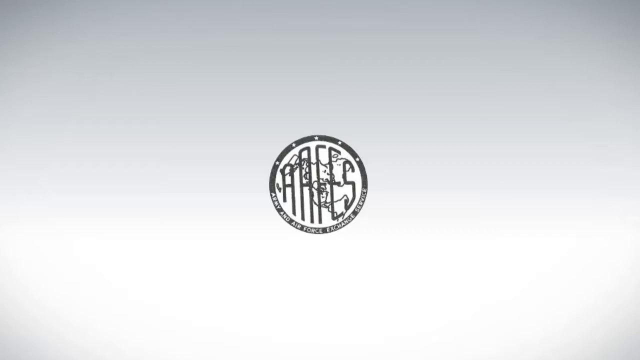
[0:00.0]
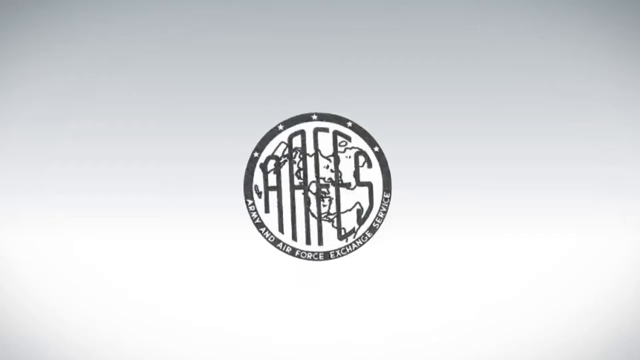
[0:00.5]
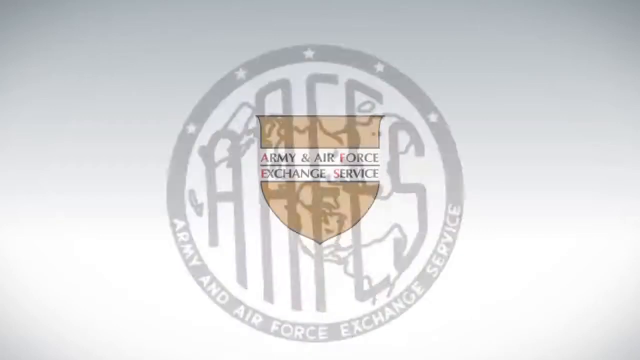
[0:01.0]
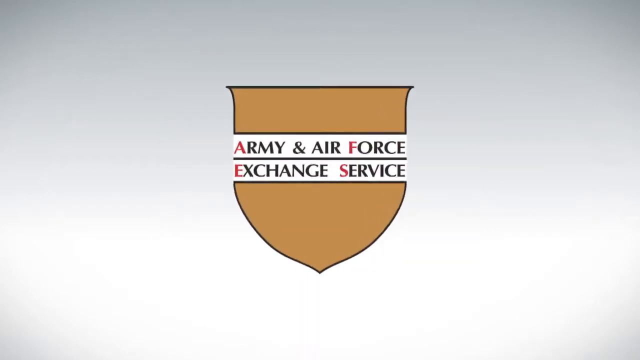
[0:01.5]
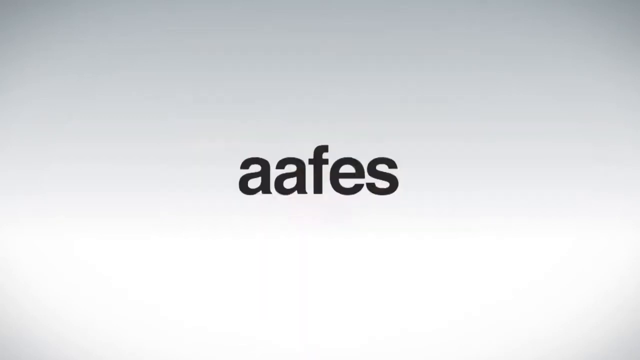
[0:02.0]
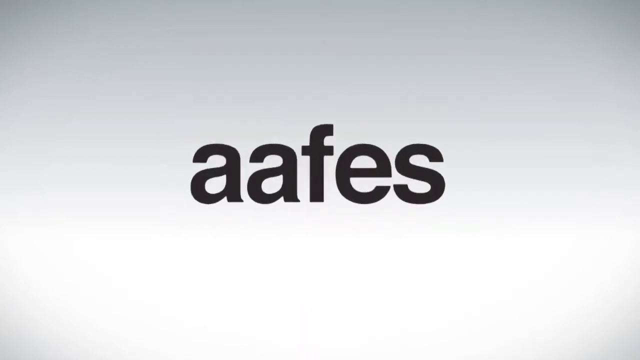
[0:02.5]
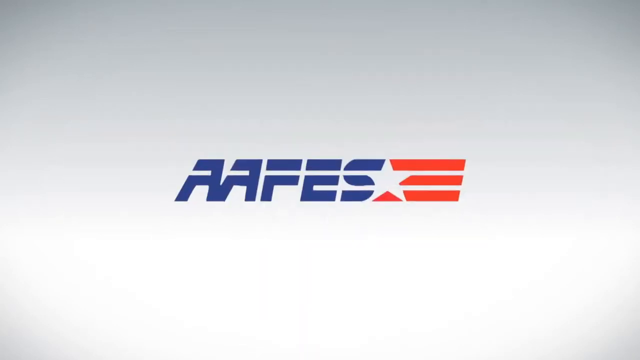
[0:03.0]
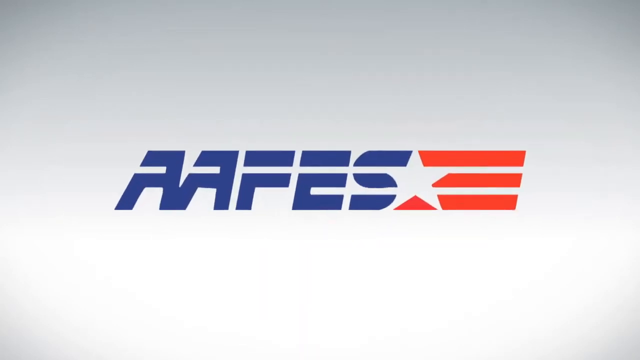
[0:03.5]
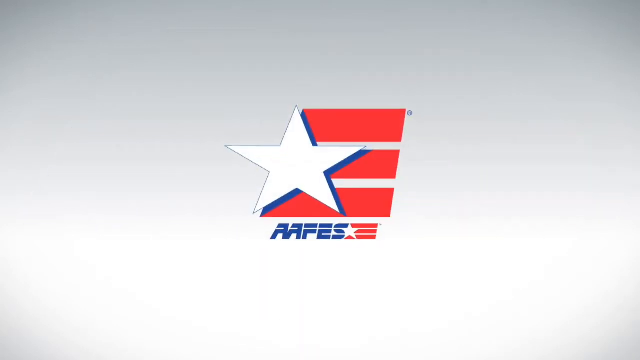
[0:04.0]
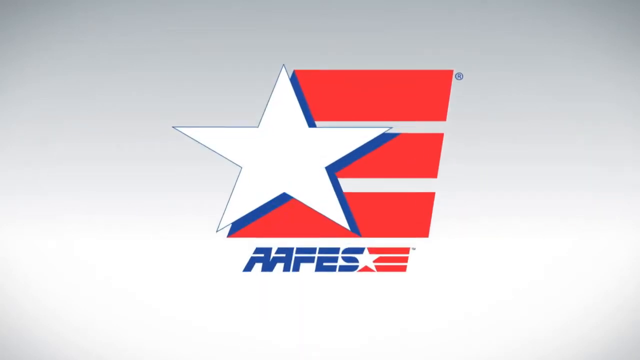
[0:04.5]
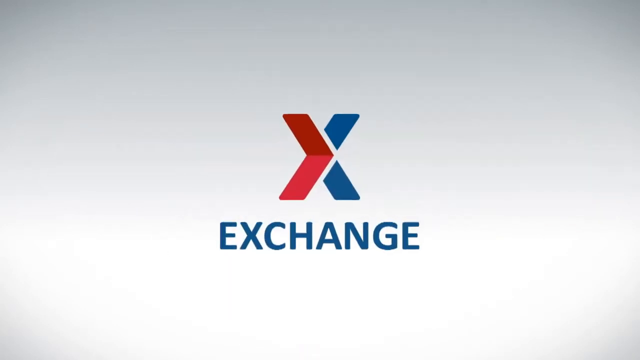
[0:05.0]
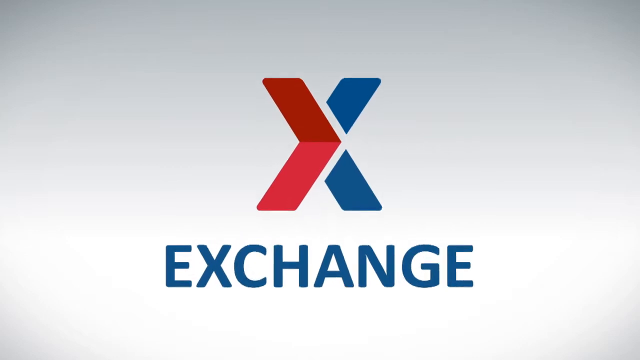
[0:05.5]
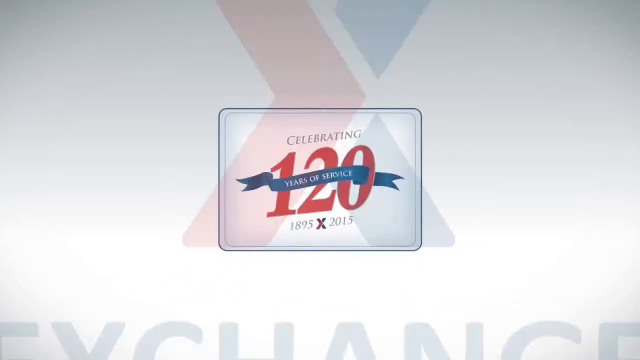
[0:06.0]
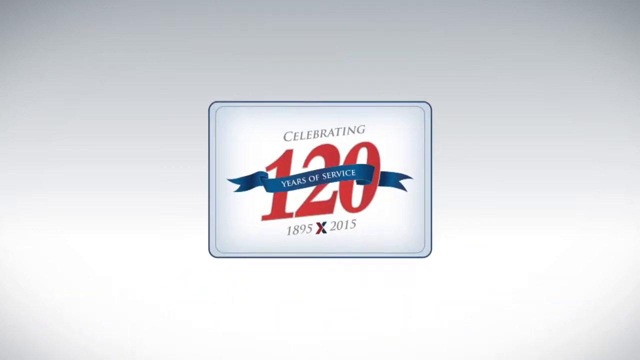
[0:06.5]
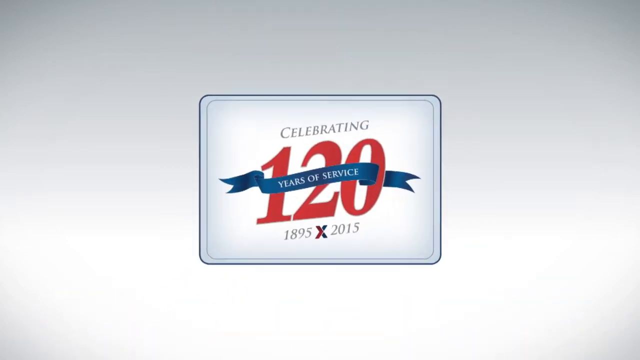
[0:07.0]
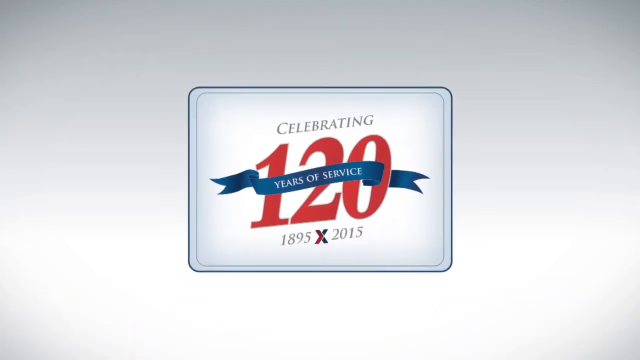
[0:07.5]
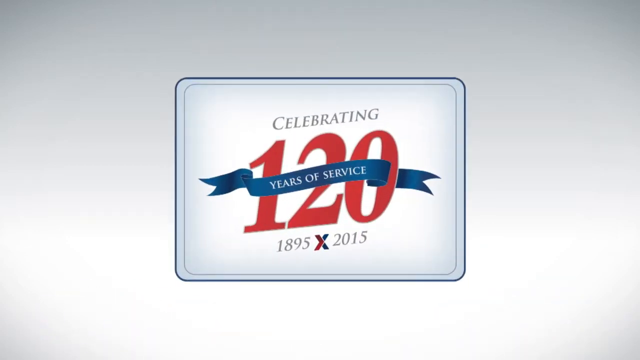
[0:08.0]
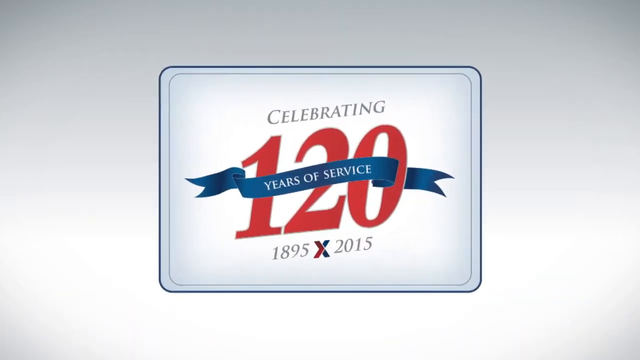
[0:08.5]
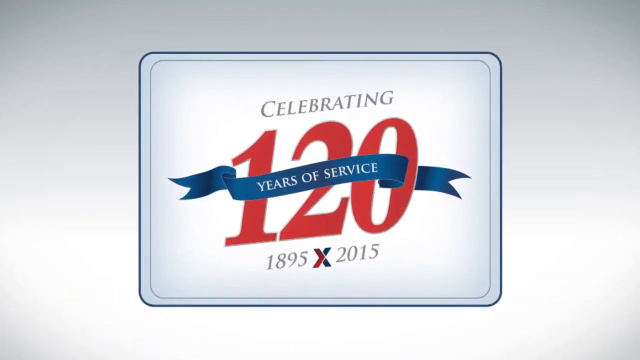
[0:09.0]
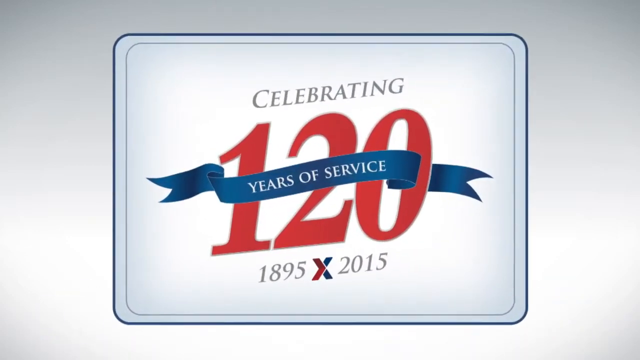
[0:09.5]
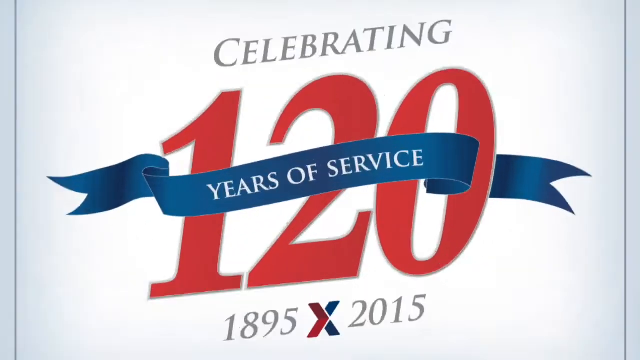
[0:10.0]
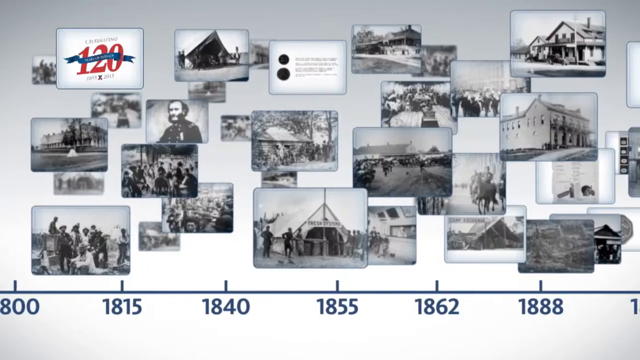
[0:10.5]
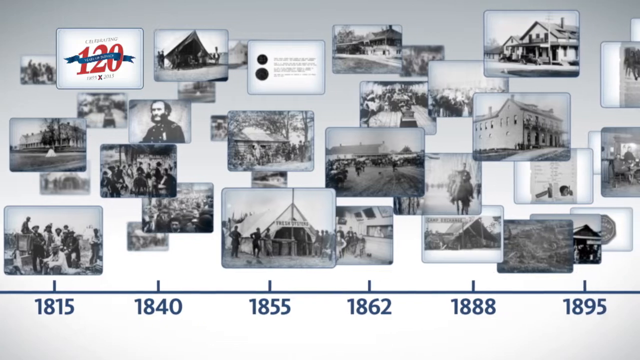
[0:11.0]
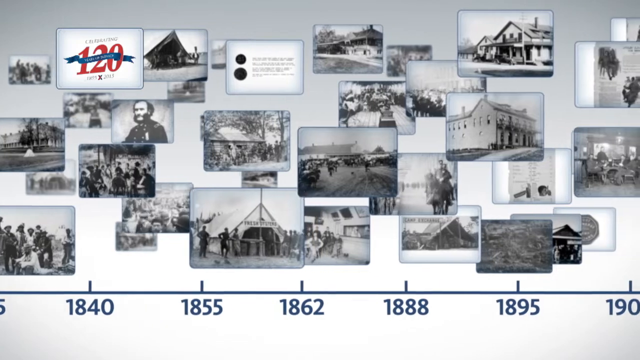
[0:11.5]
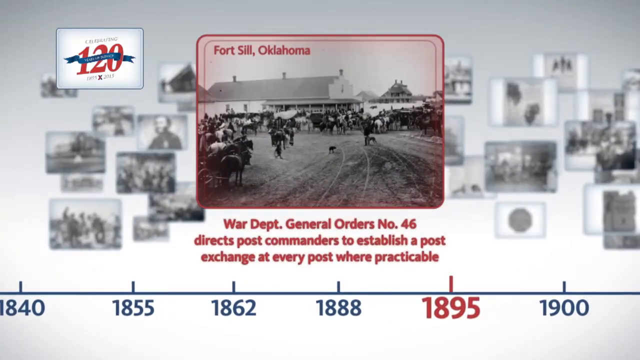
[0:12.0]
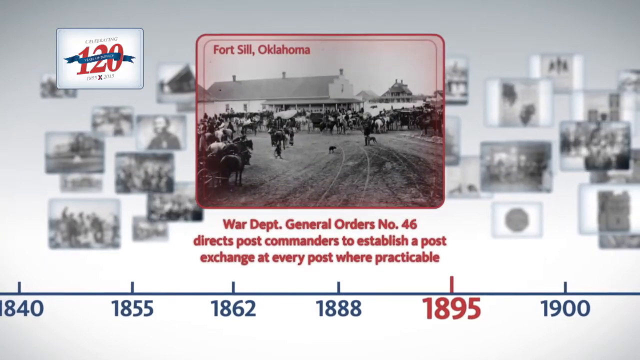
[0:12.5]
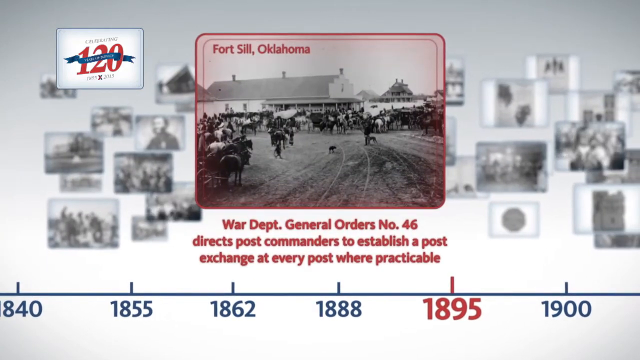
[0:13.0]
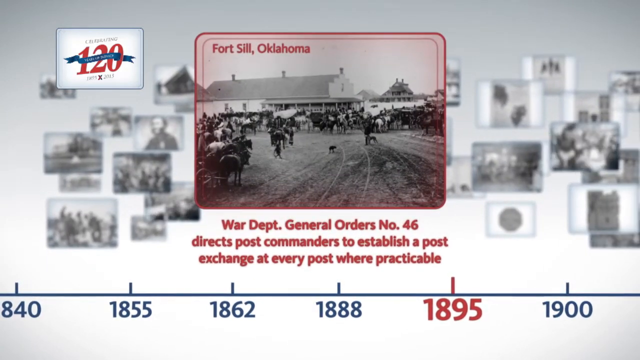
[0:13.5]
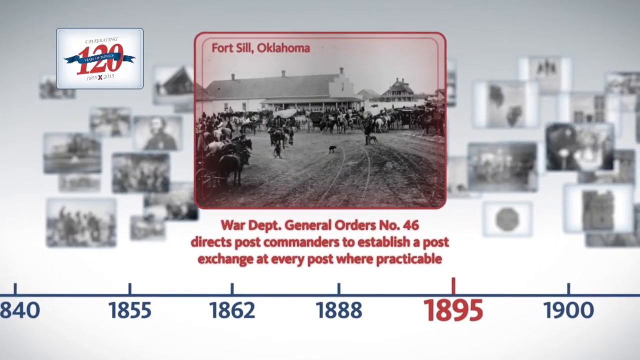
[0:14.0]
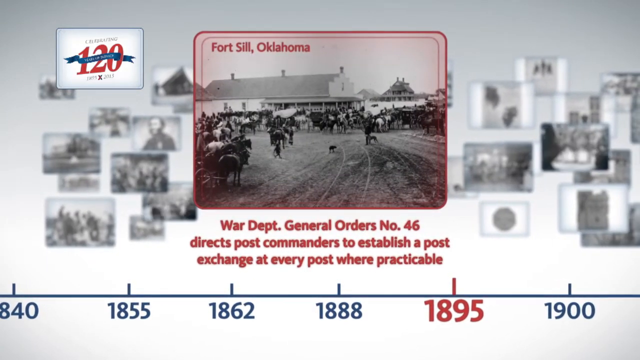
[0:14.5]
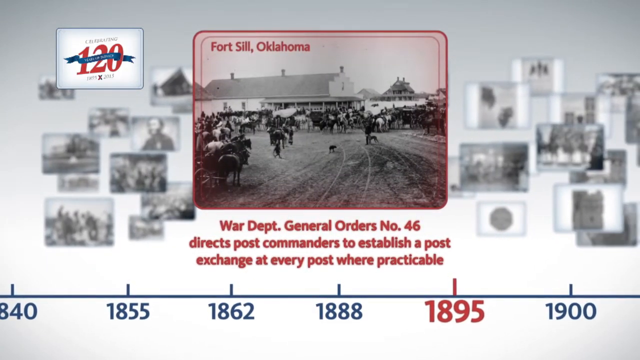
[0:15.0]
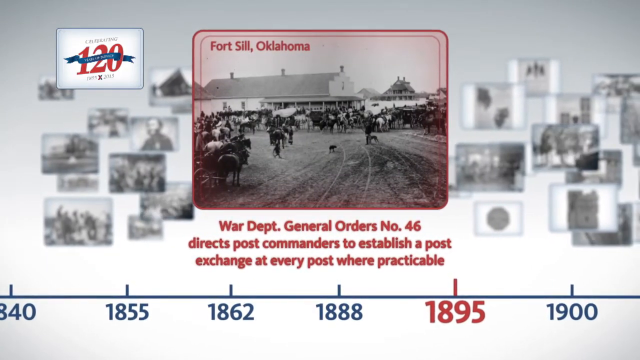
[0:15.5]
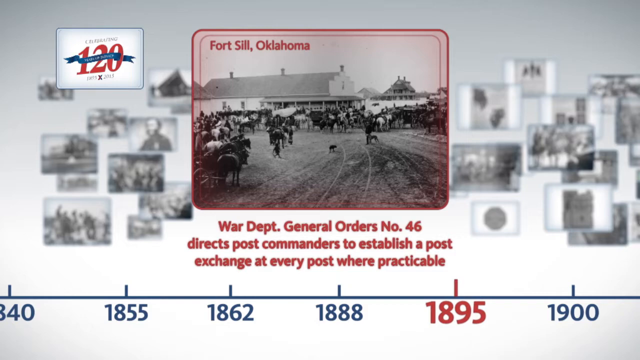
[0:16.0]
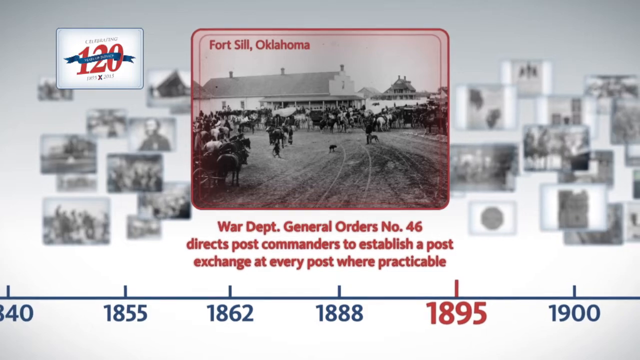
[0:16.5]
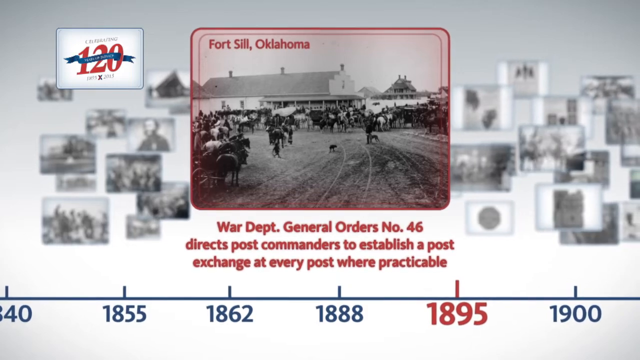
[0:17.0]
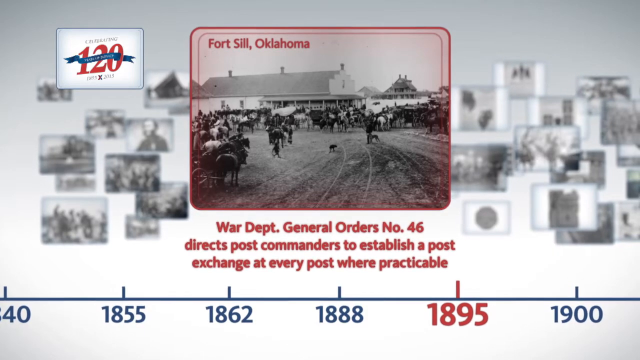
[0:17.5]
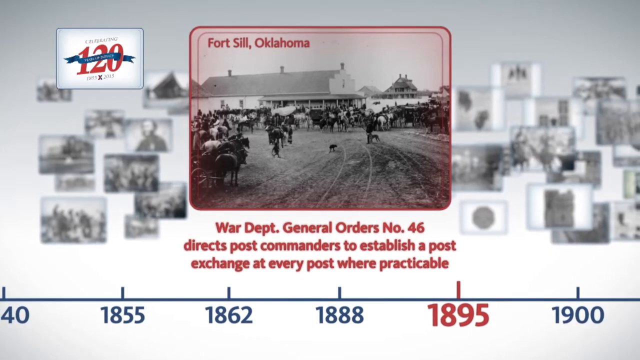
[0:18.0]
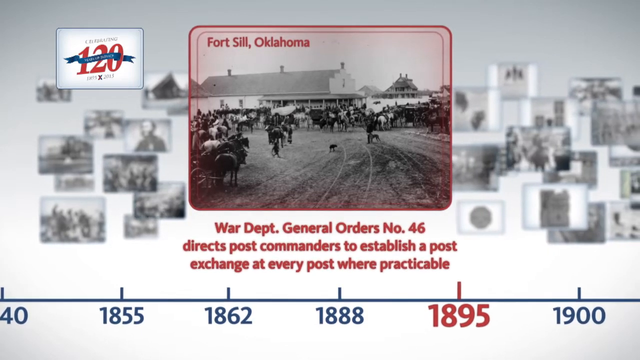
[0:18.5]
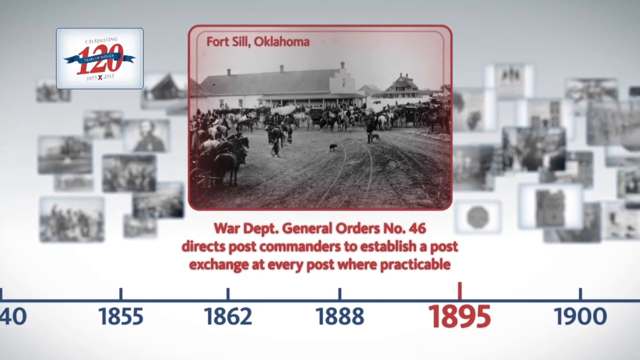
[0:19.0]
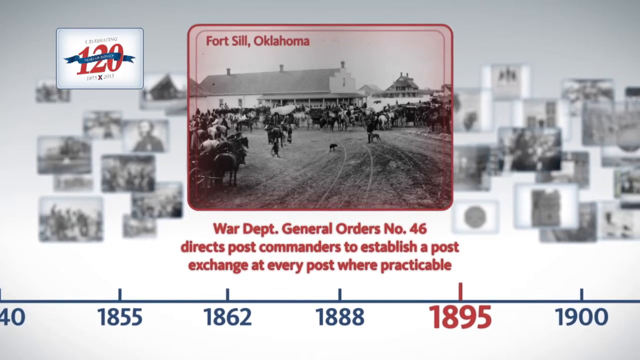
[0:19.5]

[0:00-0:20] The video opens with a series of title cards: "Army and Air Force Exchange Service" with a gold shield, and "AFES exchange." A rectangular placard celebrates 120 years of service, 1895 to 2015, with "120" in bold red. The placard grows bigger and bigger until it covers almost the entire screen. The scene then changes to a screen with a timeline at the bottom starting with 1800, showing the dates 1815, 1840, 1855, 1862 and 1888, with historical events of those years relating to the Army and Air Force depicted in black and white photos. One photo, from Fort Sill, Oklahoma, is shown in close-up; it marks 1895, when War Department General Order No. 46 directs post commanders to establish a post exchange at every post where practicable.